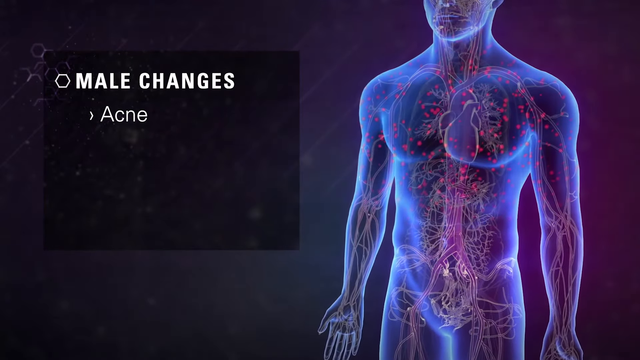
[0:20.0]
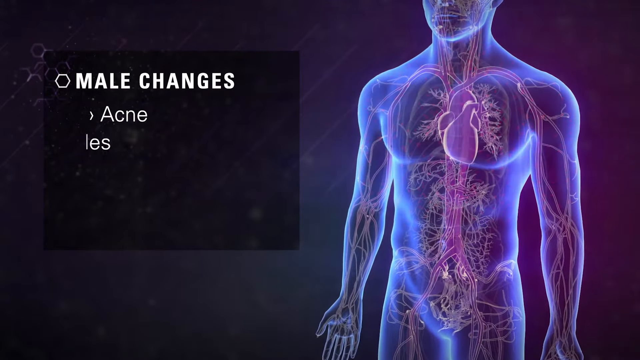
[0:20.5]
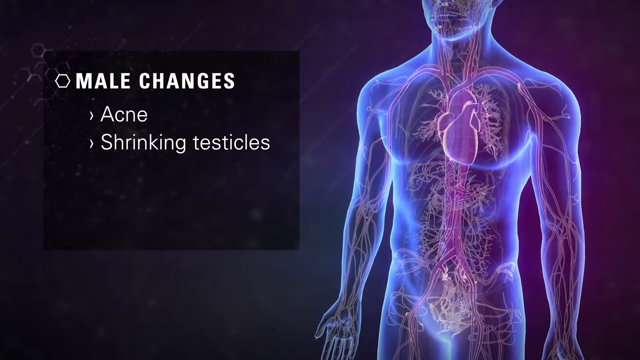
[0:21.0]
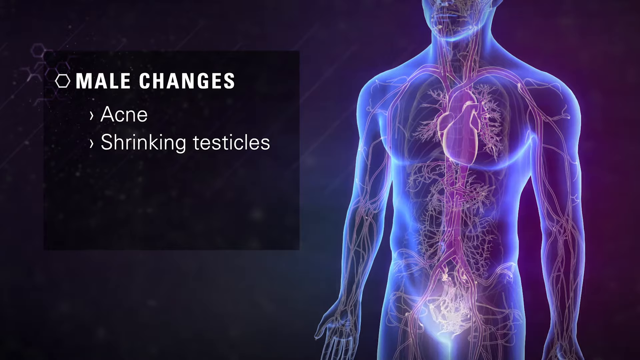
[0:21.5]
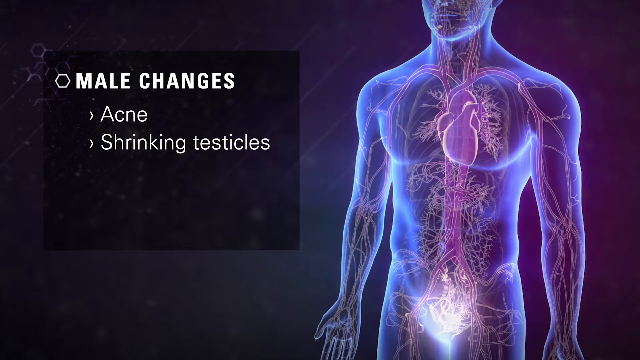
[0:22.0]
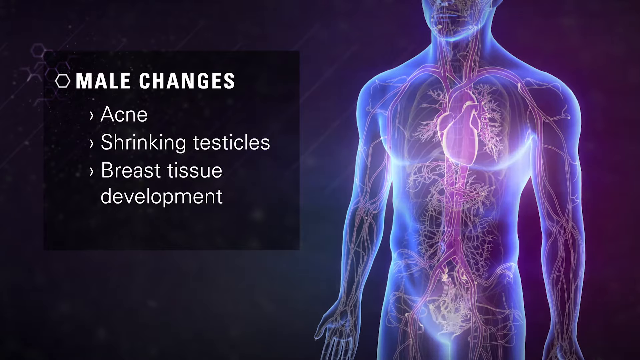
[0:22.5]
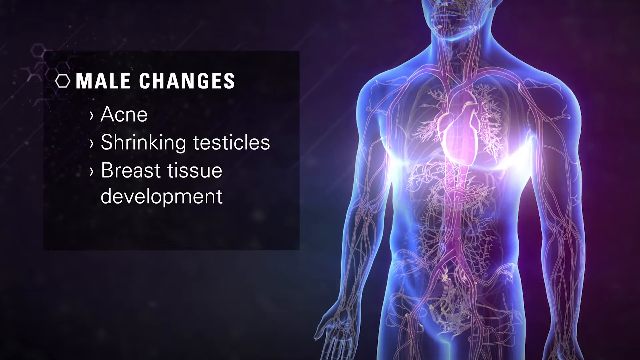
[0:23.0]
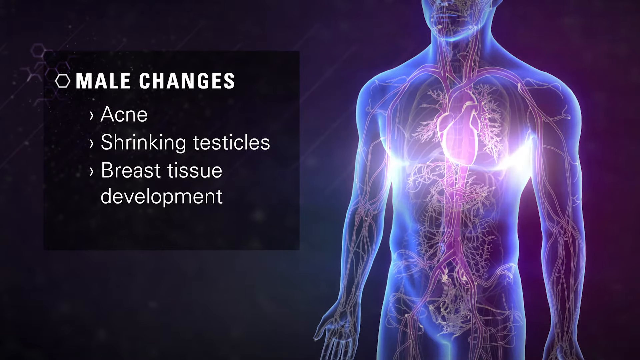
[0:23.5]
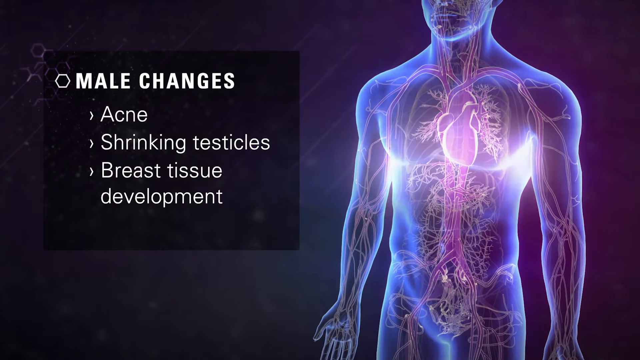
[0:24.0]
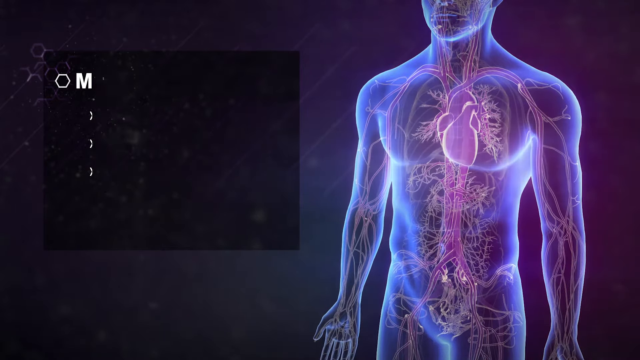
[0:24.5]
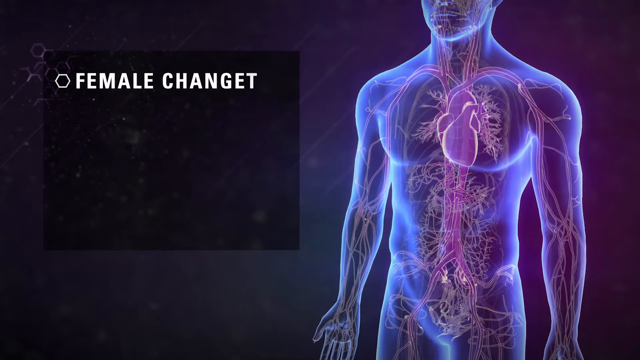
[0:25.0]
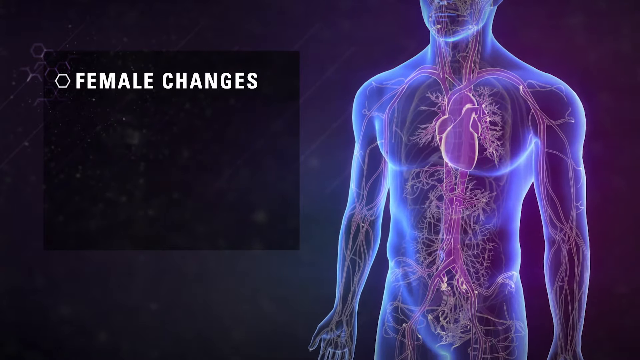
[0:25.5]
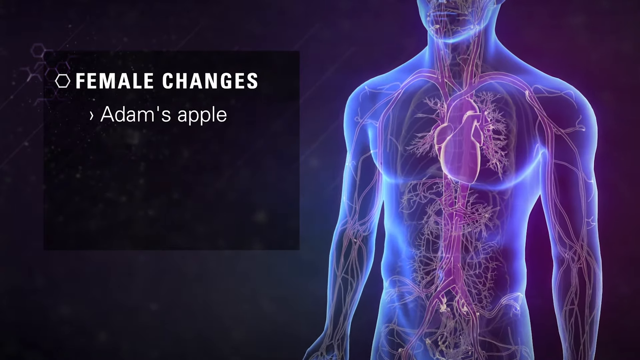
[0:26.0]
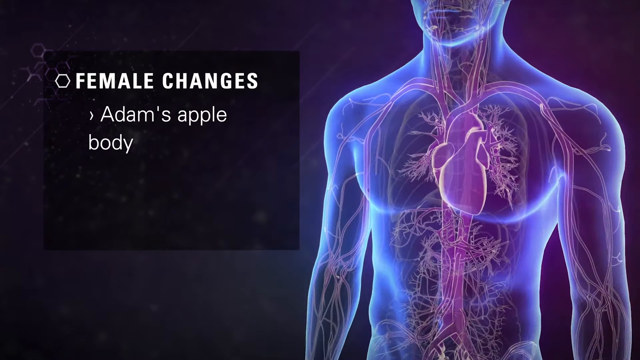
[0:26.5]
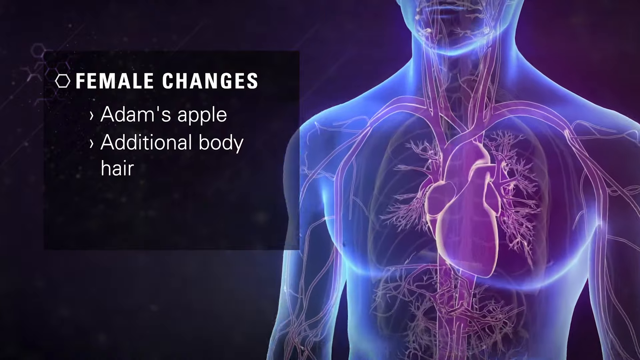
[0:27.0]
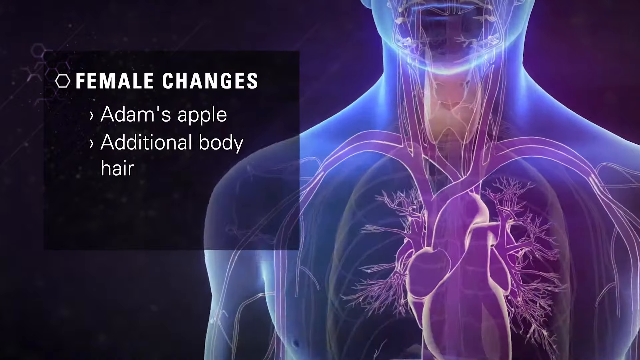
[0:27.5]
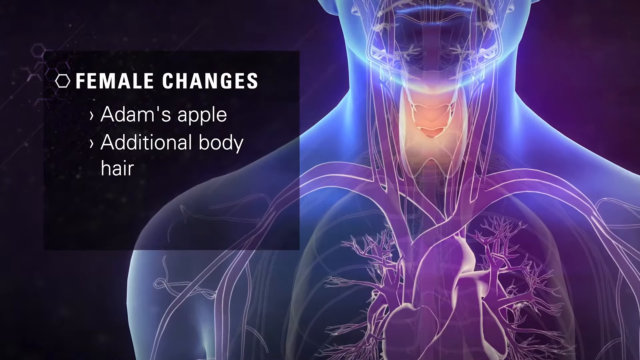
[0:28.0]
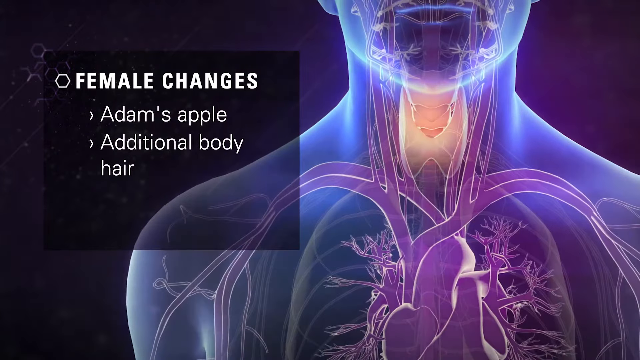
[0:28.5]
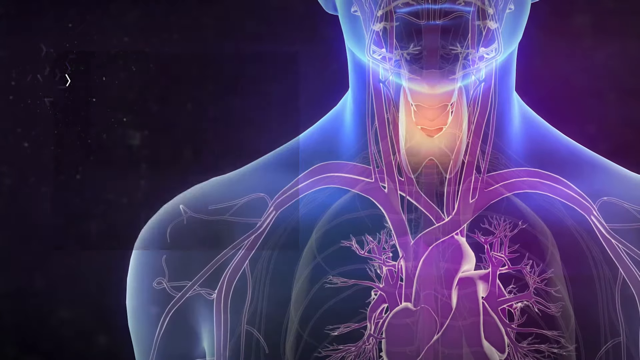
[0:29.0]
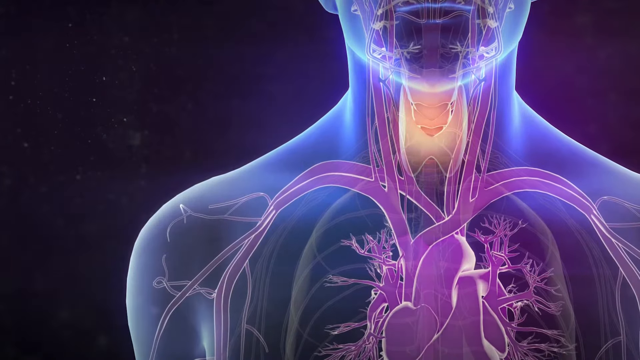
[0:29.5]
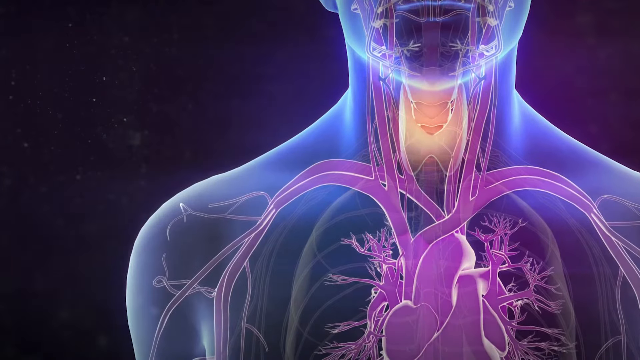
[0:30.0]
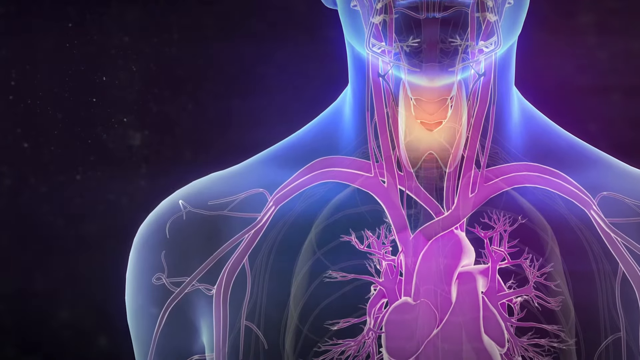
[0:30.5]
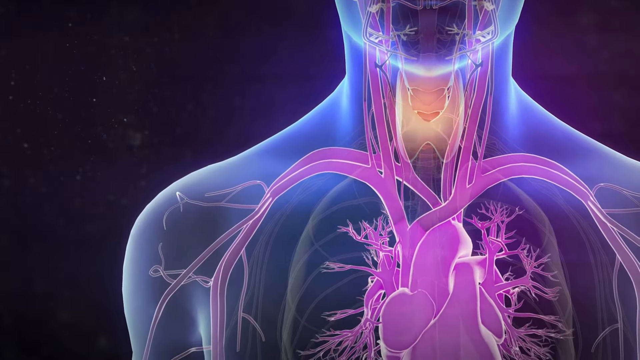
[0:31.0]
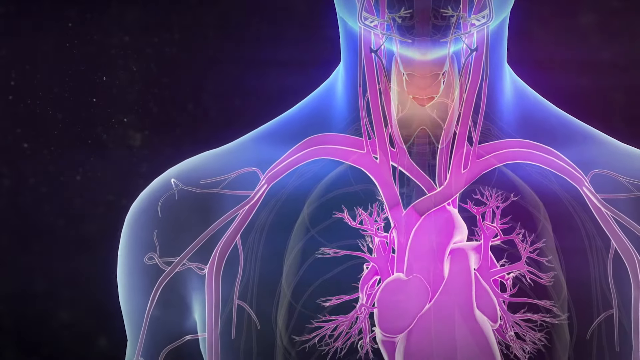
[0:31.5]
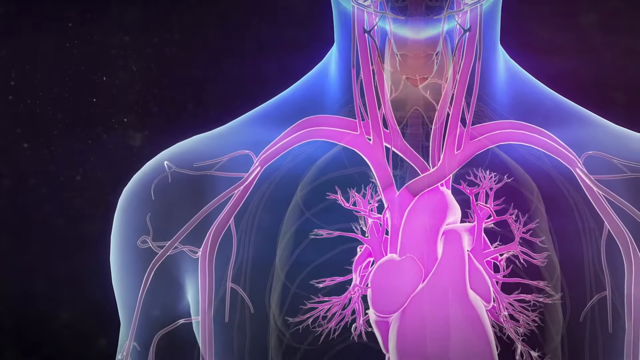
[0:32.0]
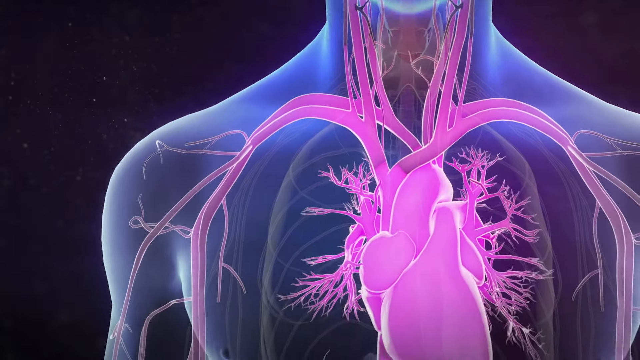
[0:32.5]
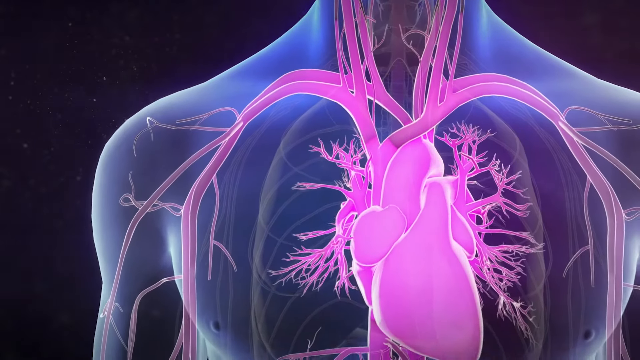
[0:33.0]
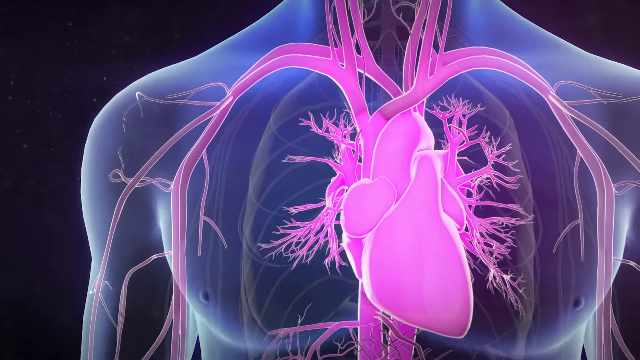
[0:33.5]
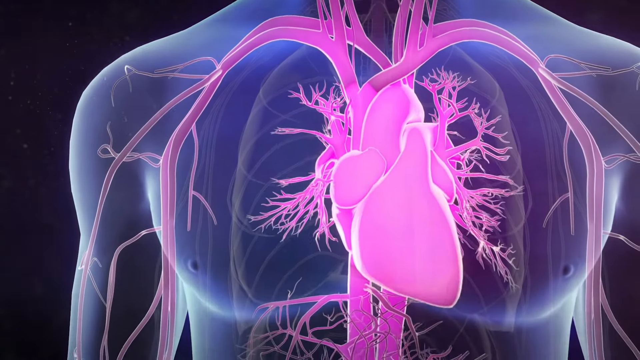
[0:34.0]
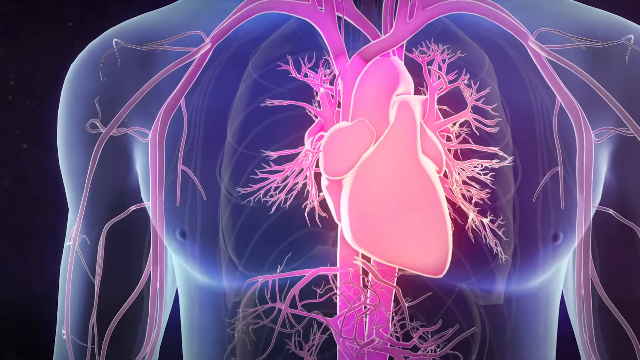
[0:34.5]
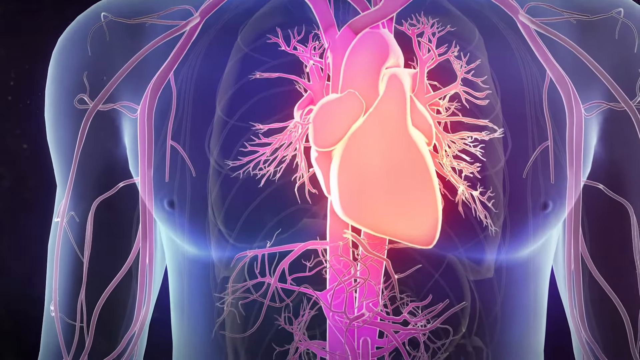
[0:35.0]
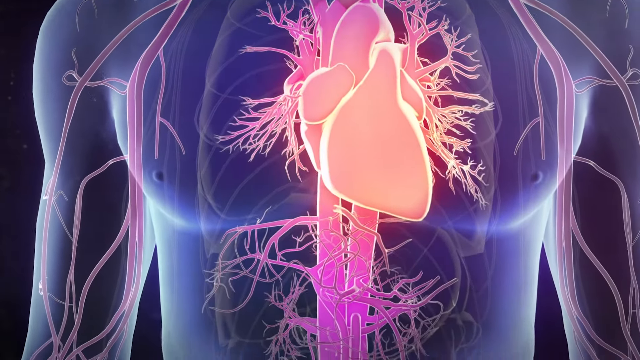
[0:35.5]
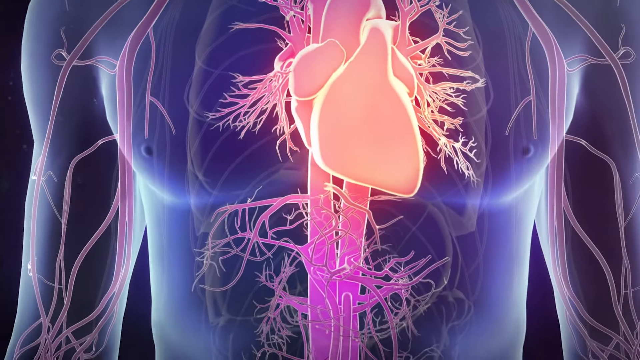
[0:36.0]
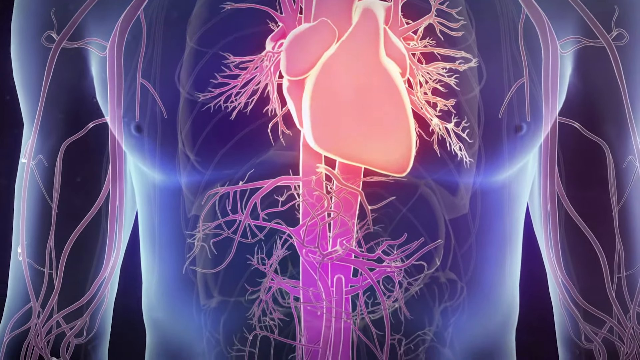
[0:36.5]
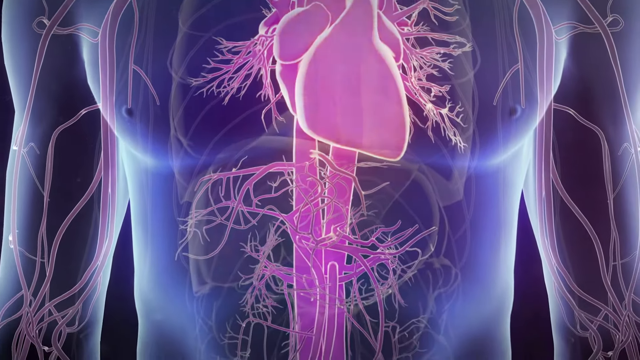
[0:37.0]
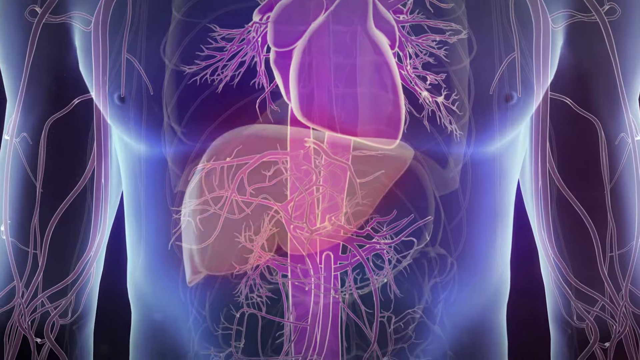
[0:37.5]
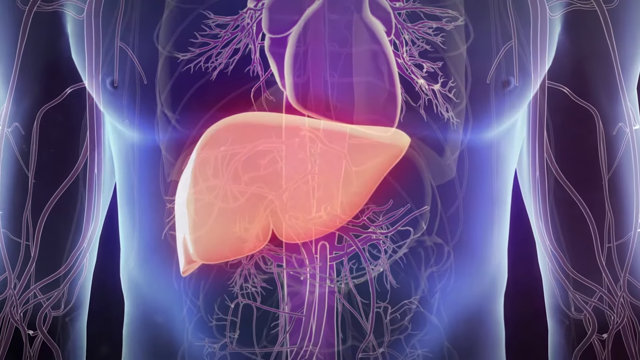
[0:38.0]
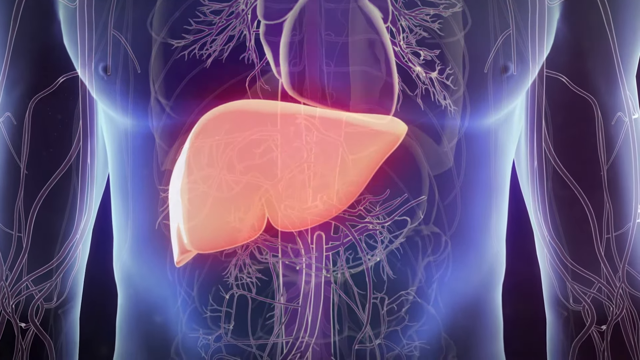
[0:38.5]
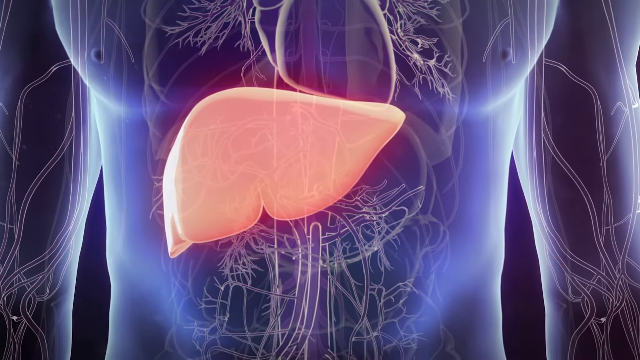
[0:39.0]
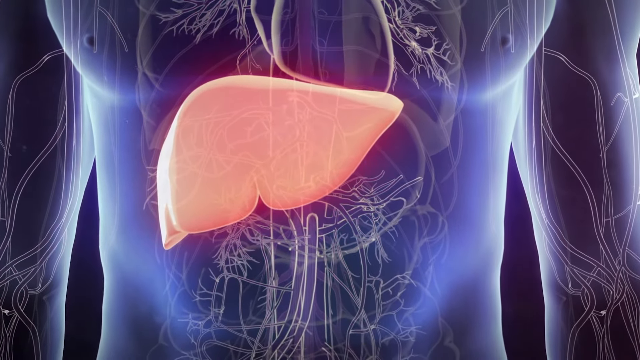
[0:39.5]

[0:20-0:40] On the right-hand side is a blue-colored male body, with the veins and organs shown in a pinkish color so they stand out. On the left, on the black background, white letters read "male changes," followed by a list: first "acne," second "shrinking testicles," and third "breast tissue development." Next come female changes, starting with an Adam's apple and then additional body hair. As the items line up, the figure on the right becomes larger and the light zooms in on the corresponding body parts, zooming in on the Adam's apple. The view then moves down the body through the heart and the liver, with the changes showing up on the figure.